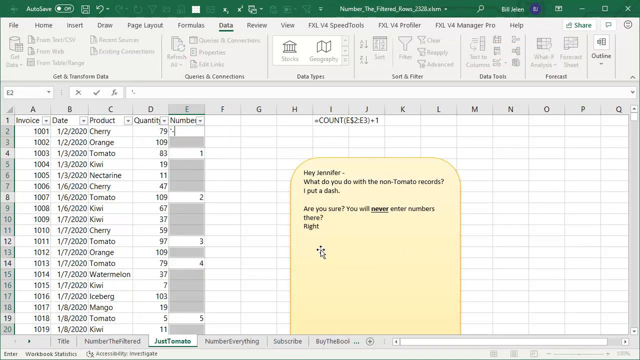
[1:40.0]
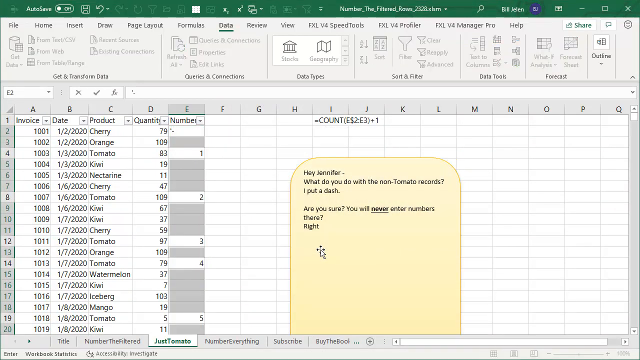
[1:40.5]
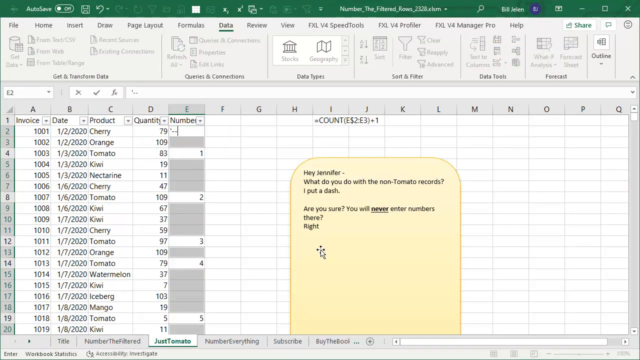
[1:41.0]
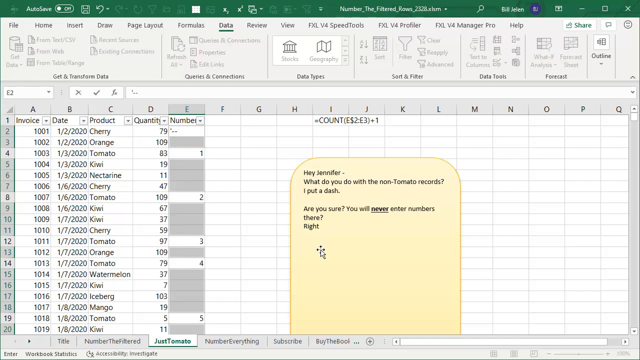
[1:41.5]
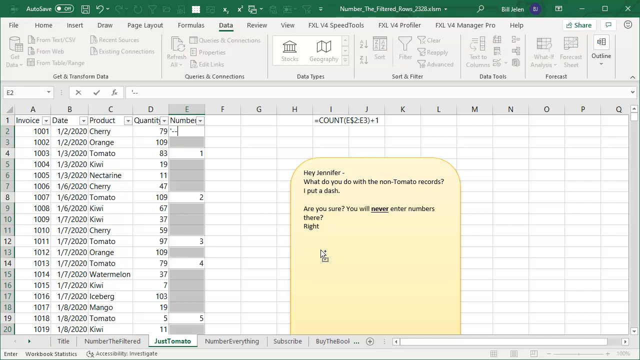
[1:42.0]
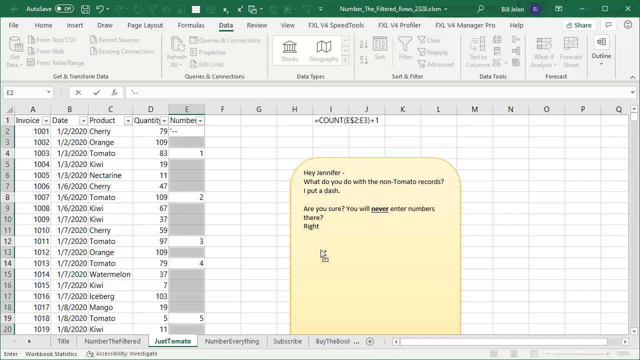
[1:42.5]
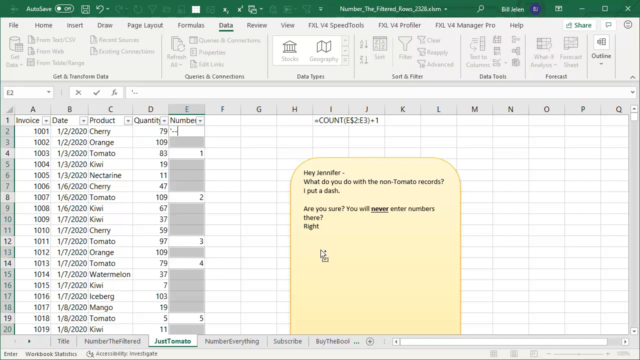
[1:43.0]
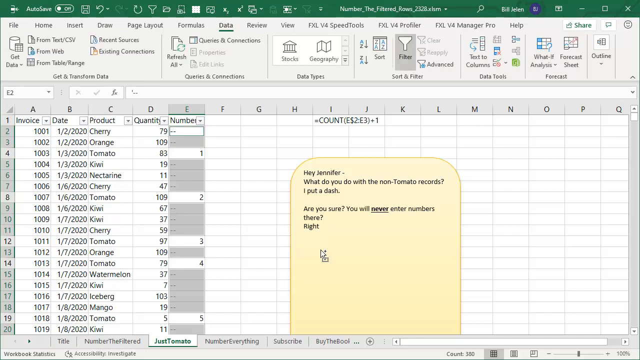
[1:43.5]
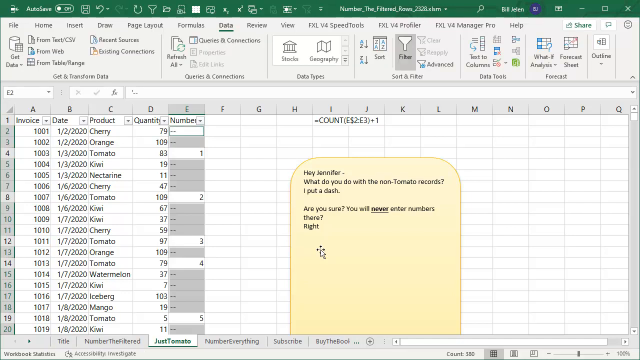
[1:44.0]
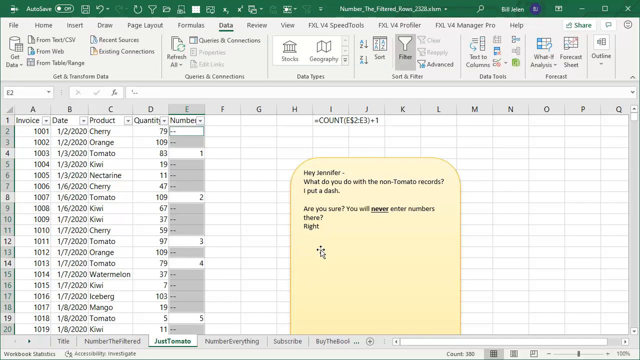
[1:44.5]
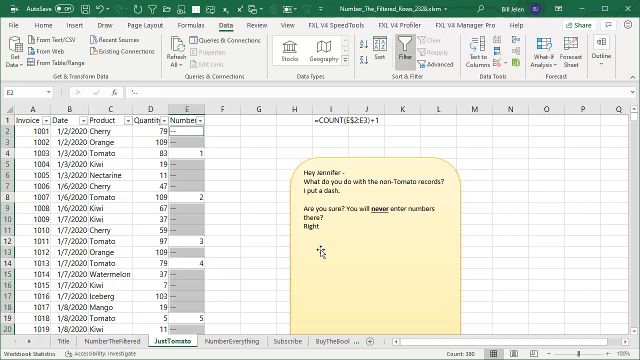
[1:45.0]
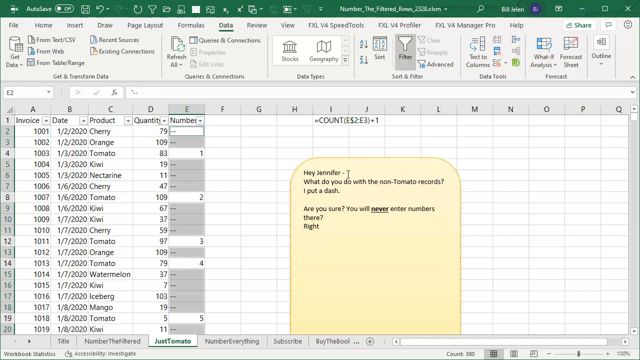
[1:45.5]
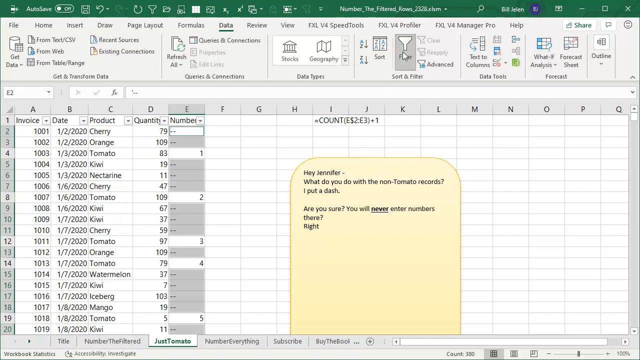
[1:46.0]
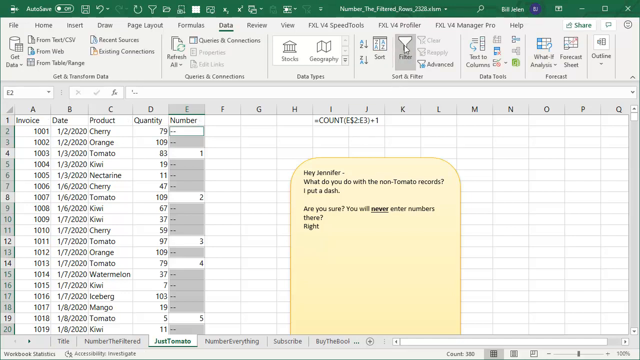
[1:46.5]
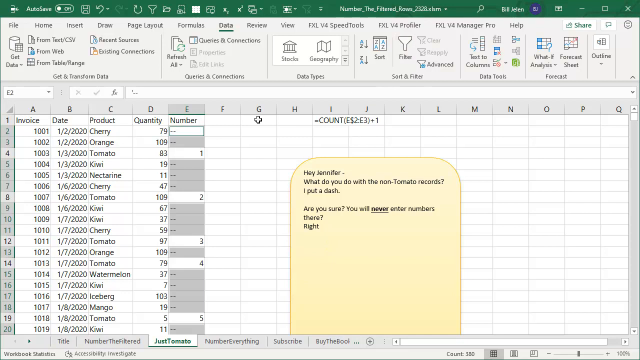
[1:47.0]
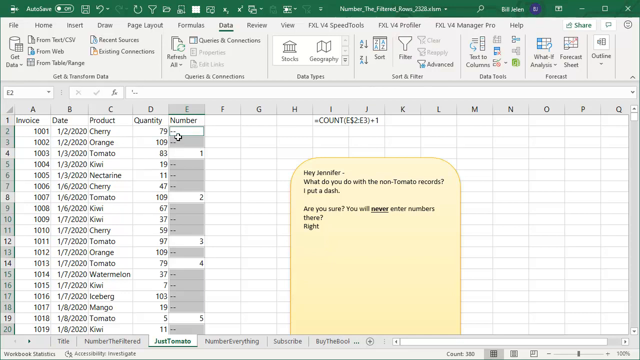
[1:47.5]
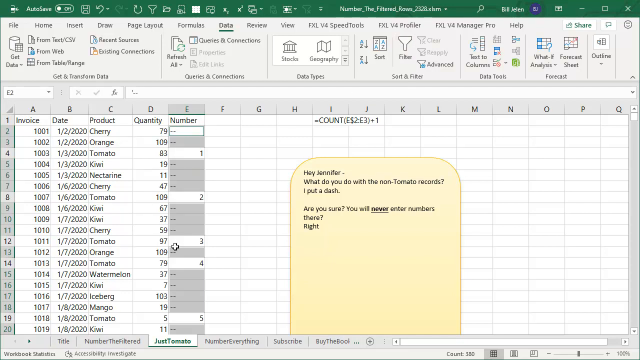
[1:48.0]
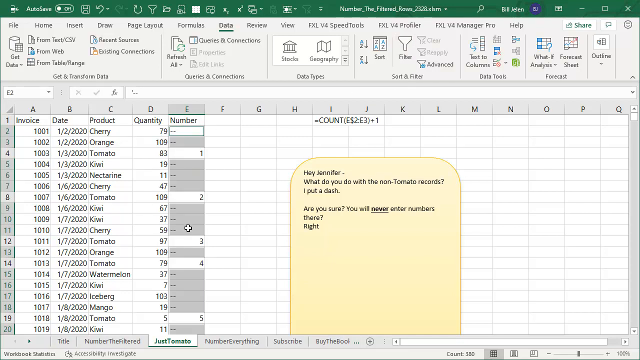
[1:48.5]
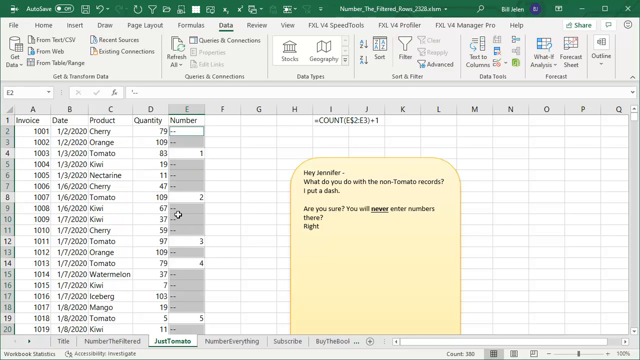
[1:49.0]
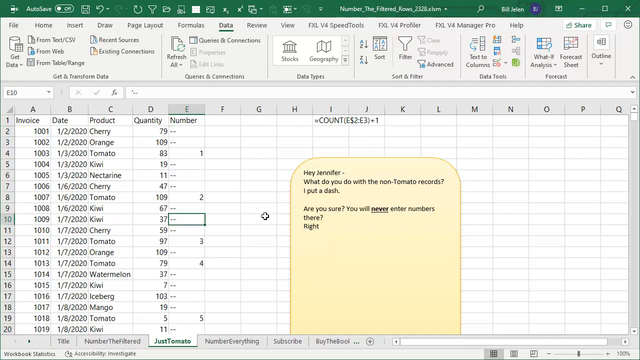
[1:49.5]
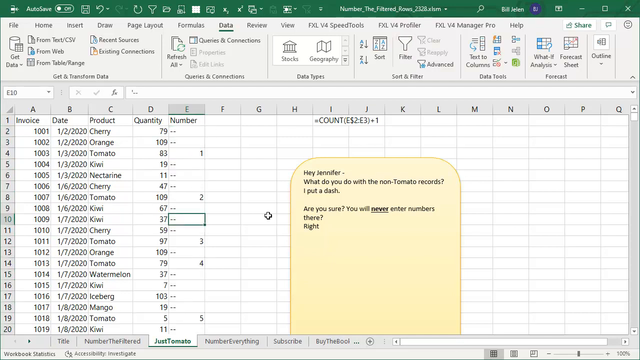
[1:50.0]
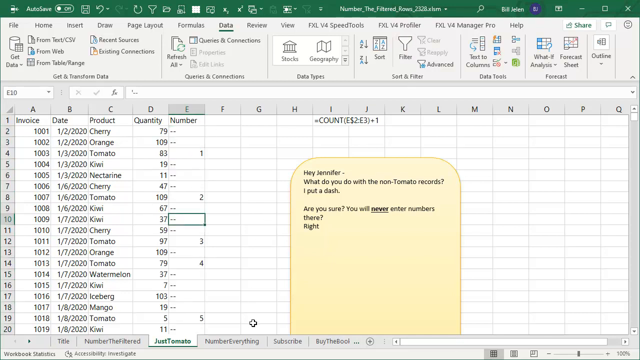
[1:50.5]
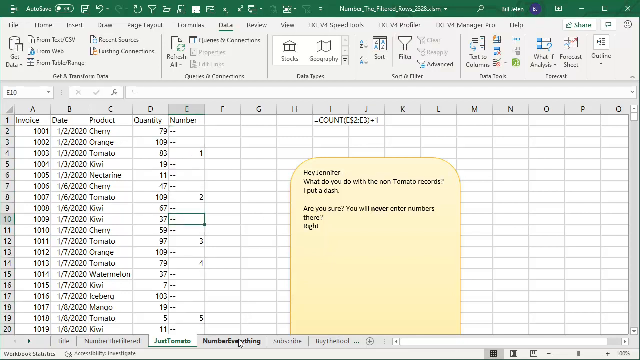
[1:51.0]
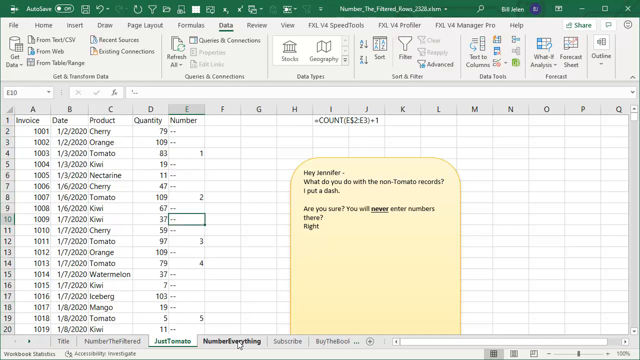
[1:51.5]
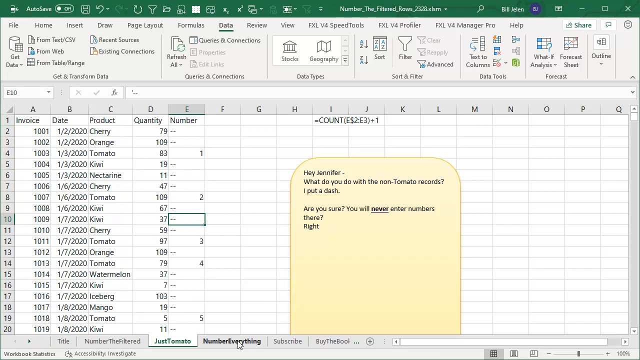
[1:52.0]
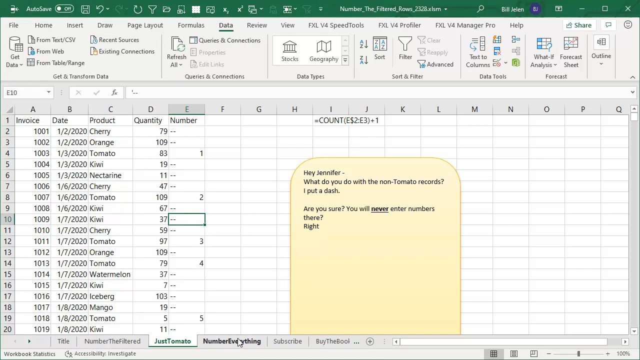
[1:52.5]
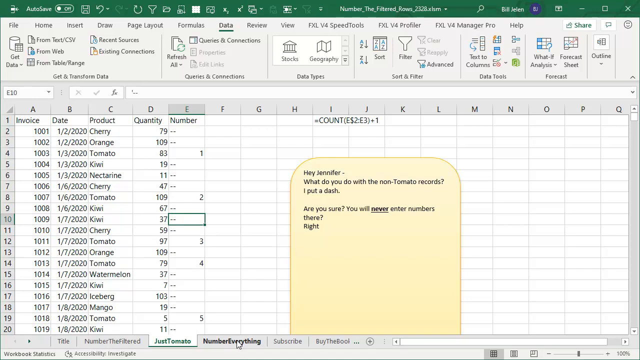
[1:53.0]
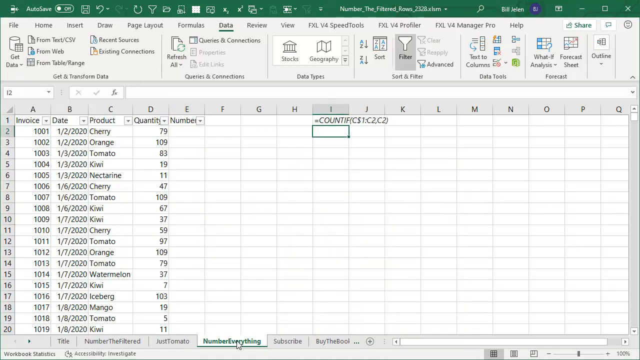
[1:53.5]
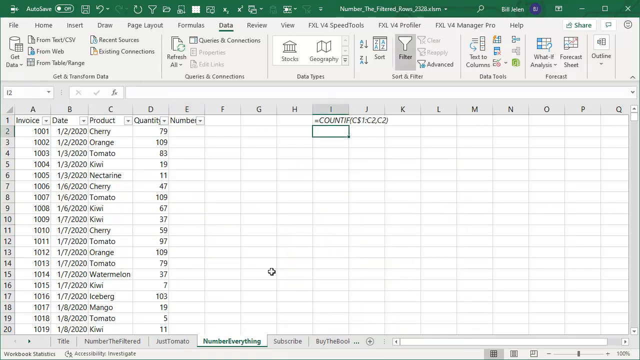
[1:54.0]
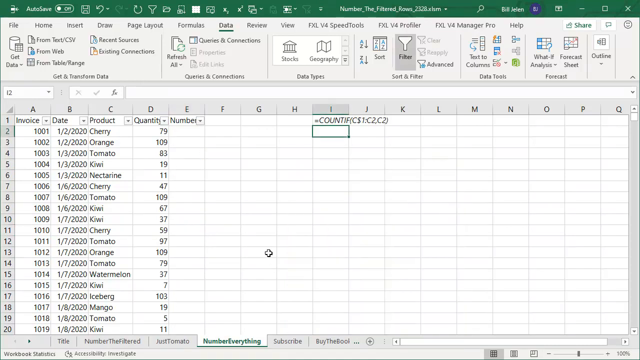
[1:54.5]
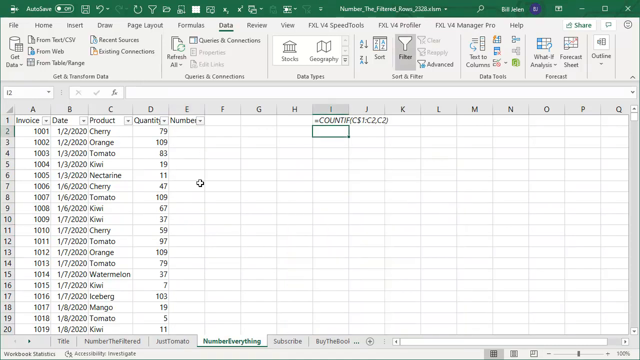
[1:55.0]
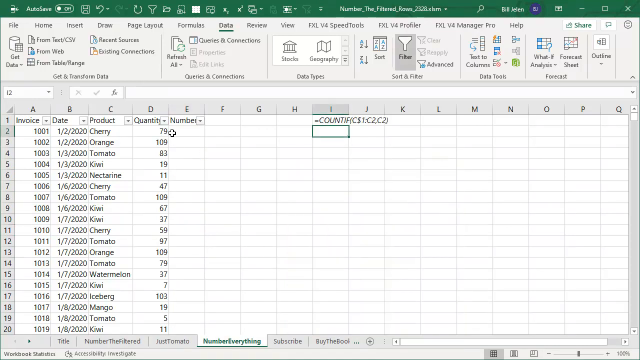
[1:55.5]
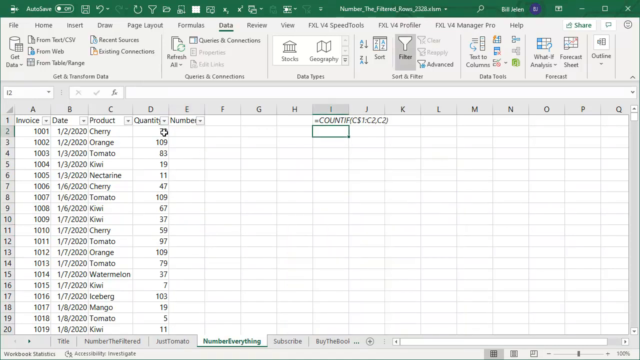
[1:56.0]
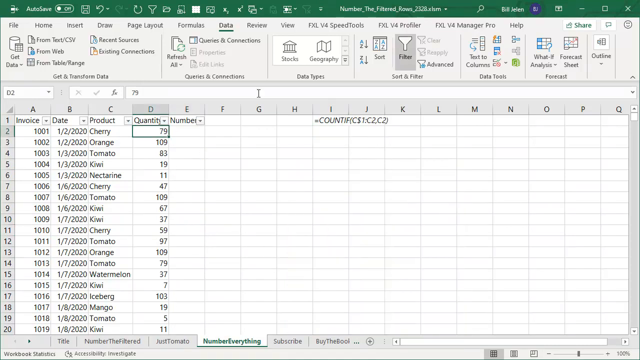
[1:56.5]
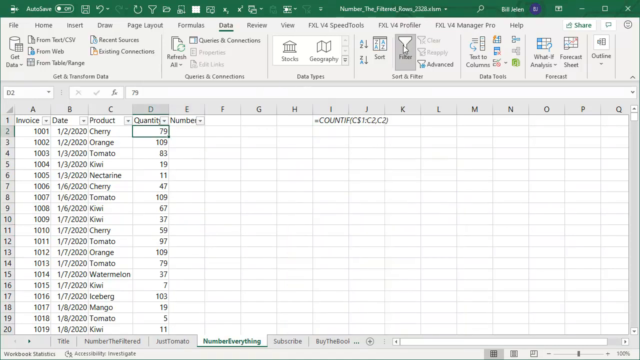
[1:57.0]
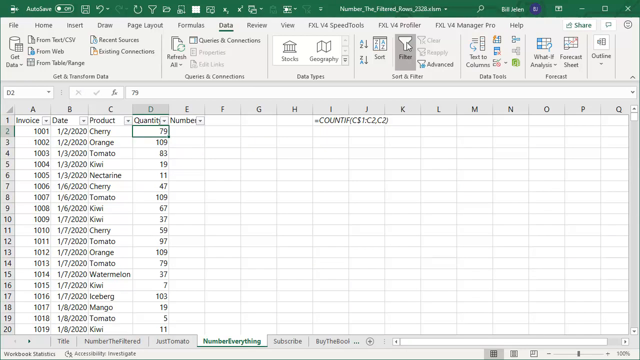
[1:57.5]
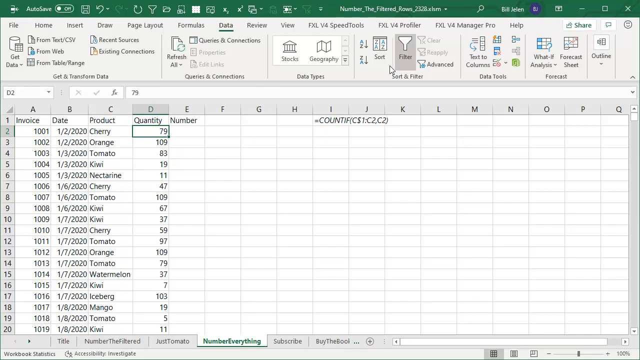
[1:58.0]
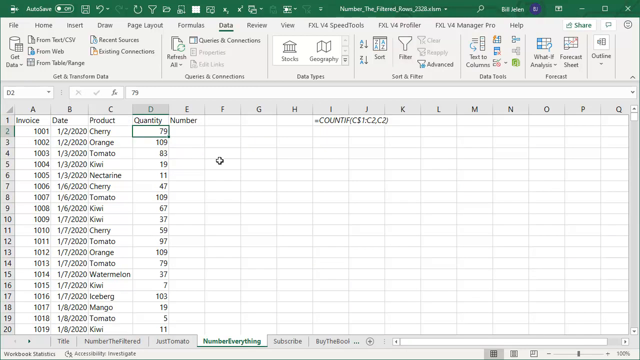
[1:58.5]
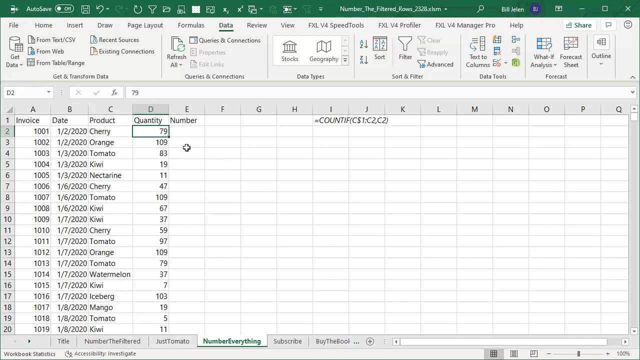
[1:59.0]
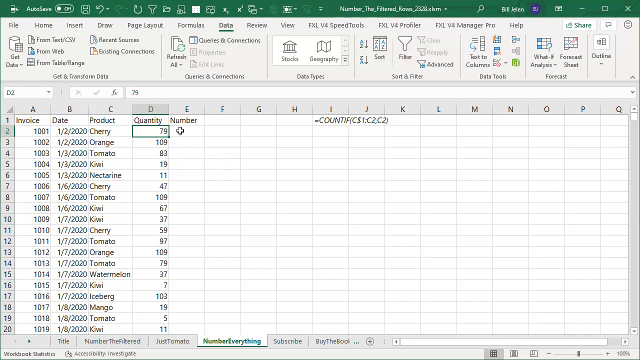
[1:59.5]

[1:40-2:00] E2 shows a dash. With his cursor moved down, there appears to be a paste option, like a square, underneath it, along with a yellow caption area. As he scrolled down the E column, the yellow caption box, instead of being an oval-shaped comment box, was apparently clicked and dragged to make it longer vertically. He clicks back on the filter, which now becomes active and is no longer a dark gray box. The previously empty cells now show dashes instead of nothing. He clicks the dash in E10, goes to the bottom and clicks the "number everything" tab. Under I1 there is a formula beginning with an equals sign, with parentheses containing C1 and C2. He clicks the quantity 79 in D2, goes up to the filter again, and then clicks E2, the cell to the right.